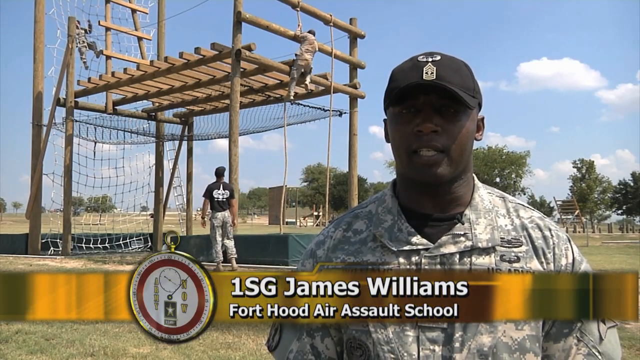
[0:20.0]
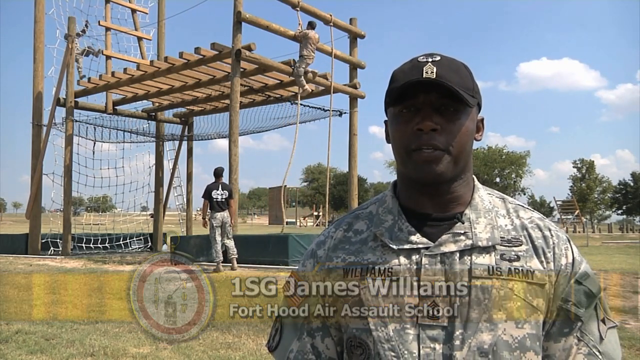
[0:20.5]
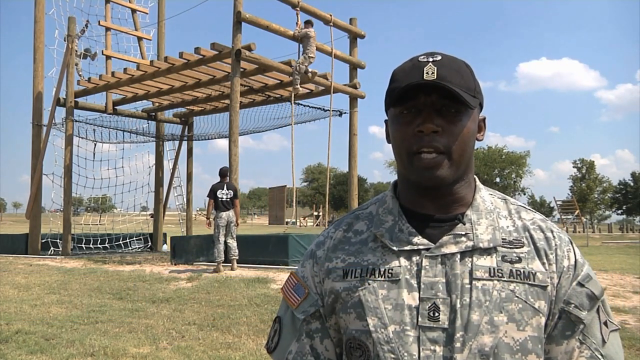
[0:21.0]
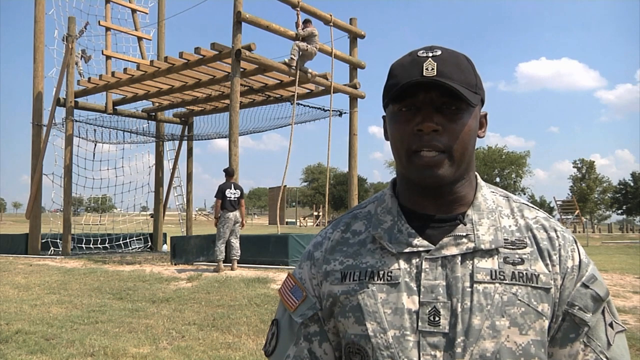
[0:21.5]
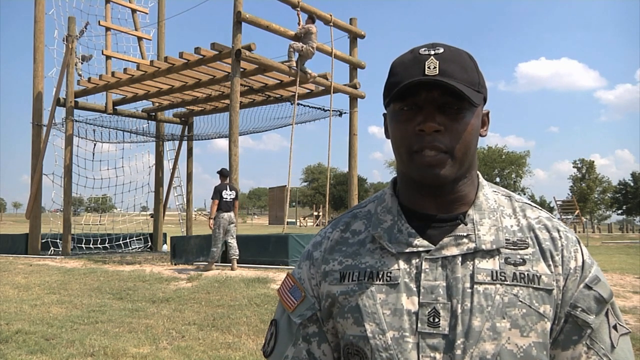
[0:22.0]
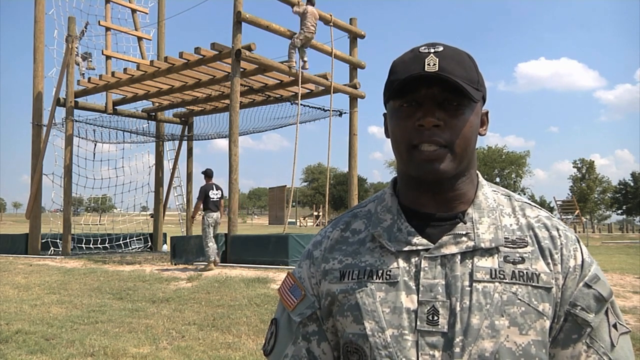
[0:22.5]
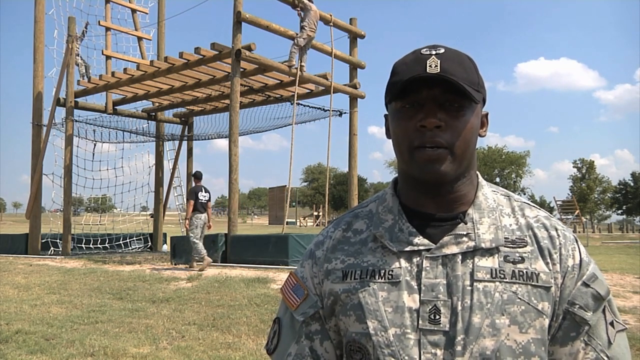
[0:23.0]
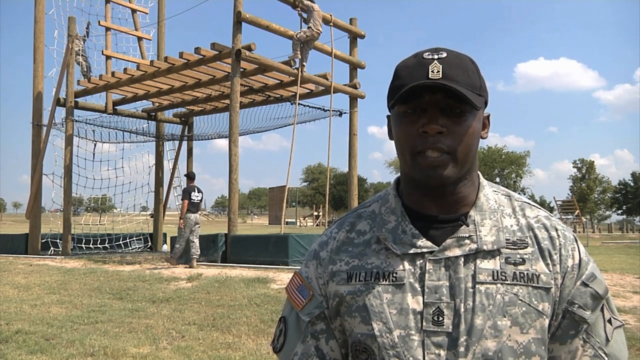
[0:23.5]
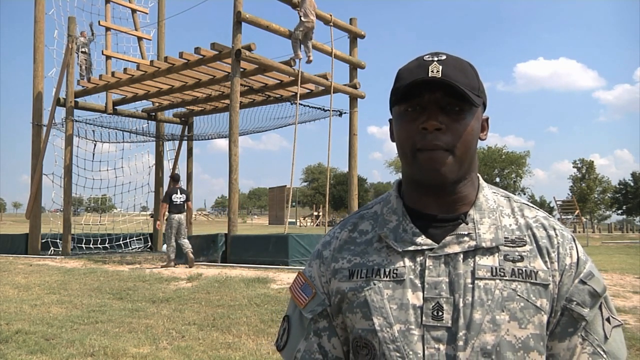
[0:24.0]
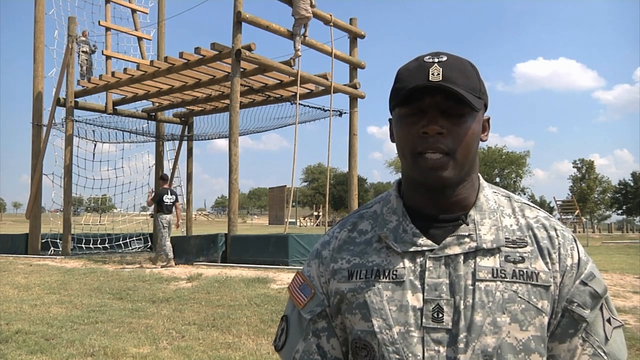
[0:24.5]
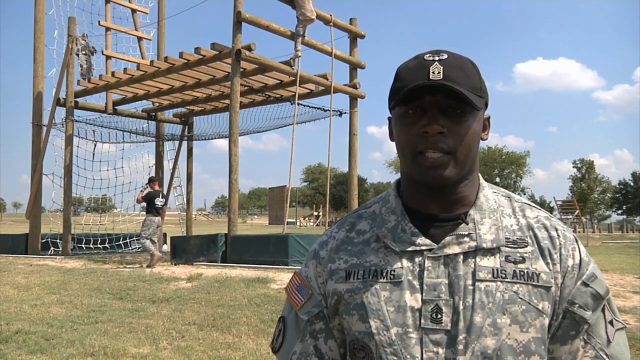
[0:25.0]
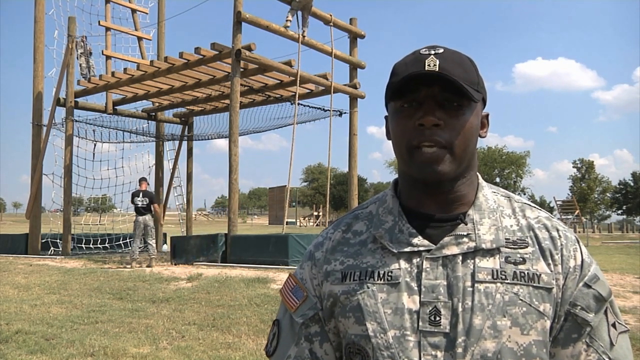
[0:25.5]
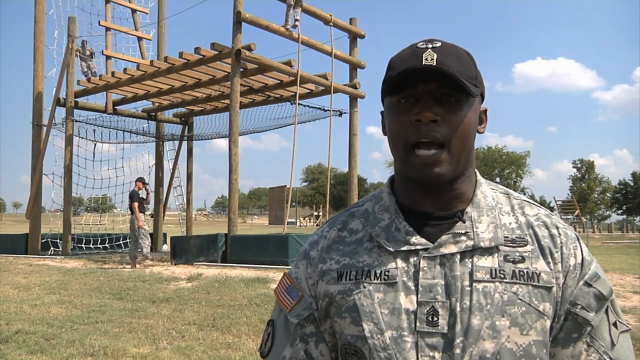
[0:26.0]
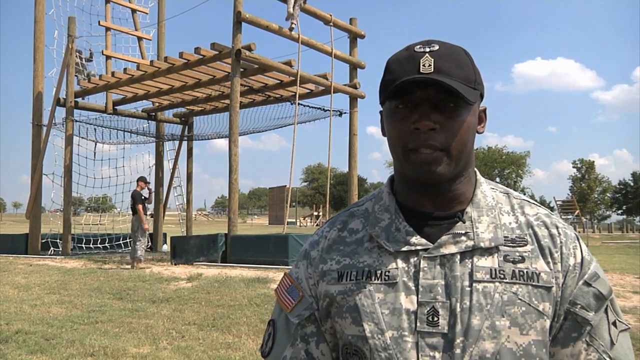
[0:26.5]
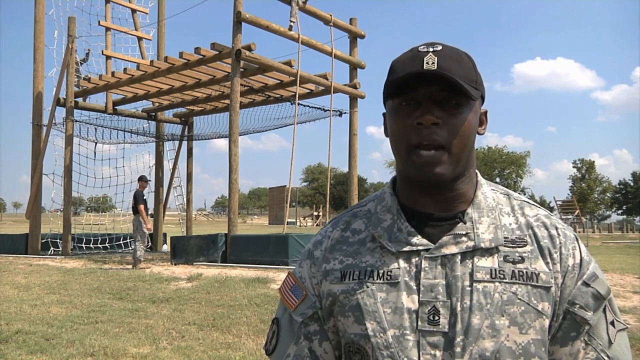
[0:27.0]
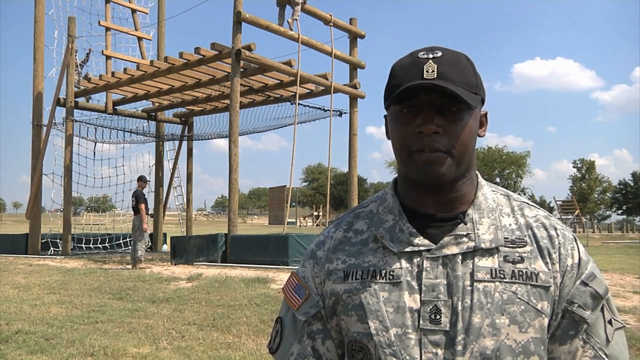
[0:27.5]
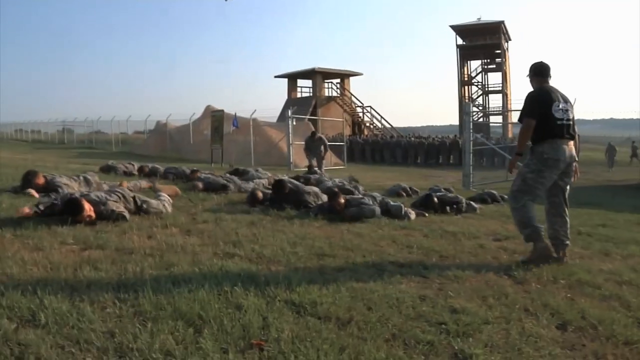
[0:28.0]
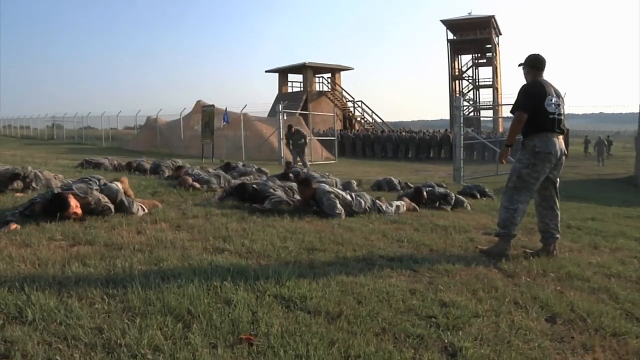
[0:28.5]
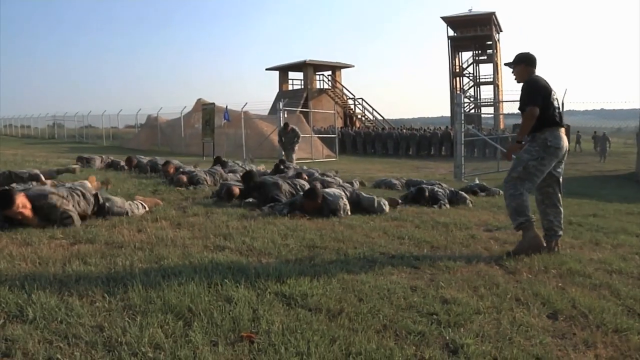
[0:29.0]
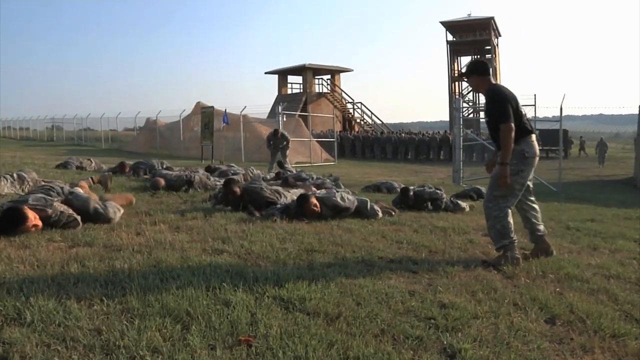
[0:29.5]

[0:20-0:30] A man stands at the front of the frame, looking and talking to the camera. Underneath him his name, 1st Sgt. James Williams, is displayed next to the 3D compass, with "Fort Hood Air Assault School" underneath his name. In the background, three men are on an obstacle course. One man climbs up the rope, steps his left foot onto the platform and pulls himself up. Meanwhile, a man climbs on the netting on the left side, and a man wearing a black baseball hat walks on the ground looking up at them. The video cuts to a group of soldiers crawling across the ground while two instructors look down at them. Two towers are visible in the background.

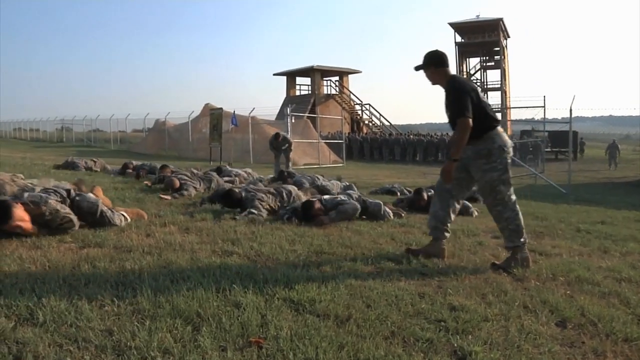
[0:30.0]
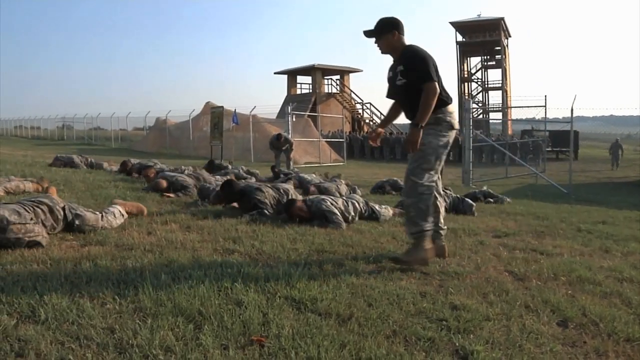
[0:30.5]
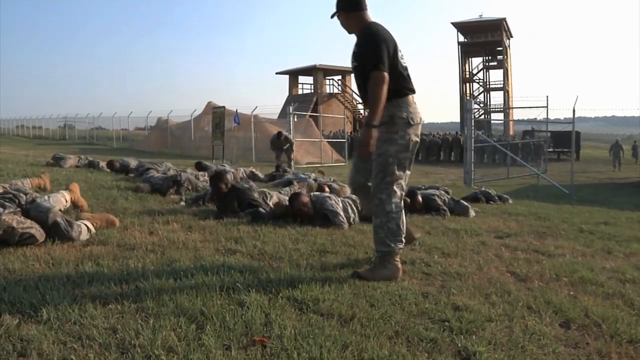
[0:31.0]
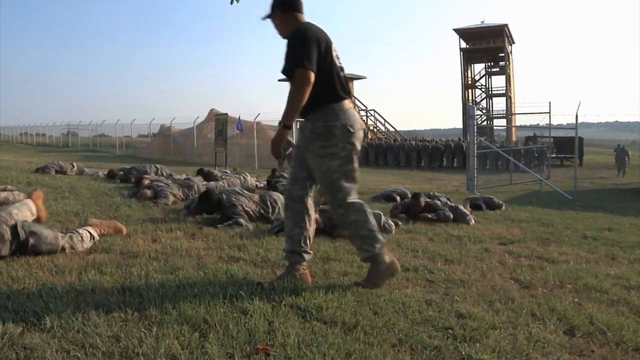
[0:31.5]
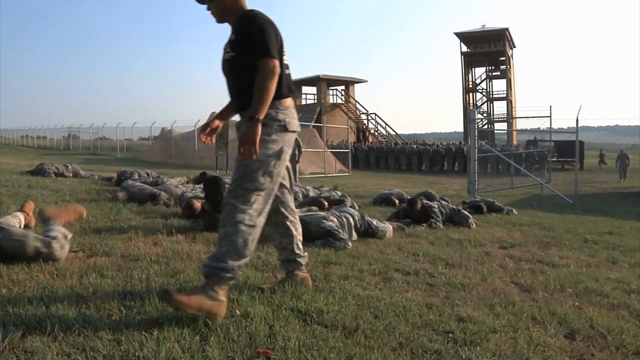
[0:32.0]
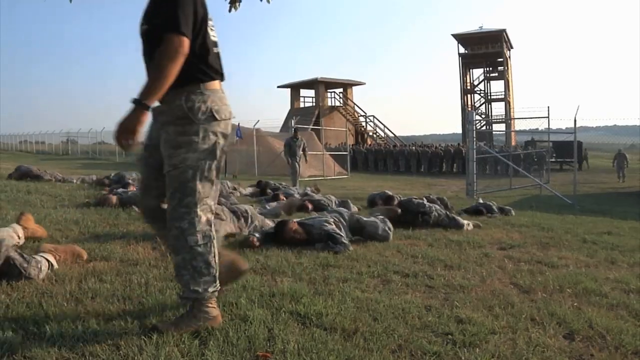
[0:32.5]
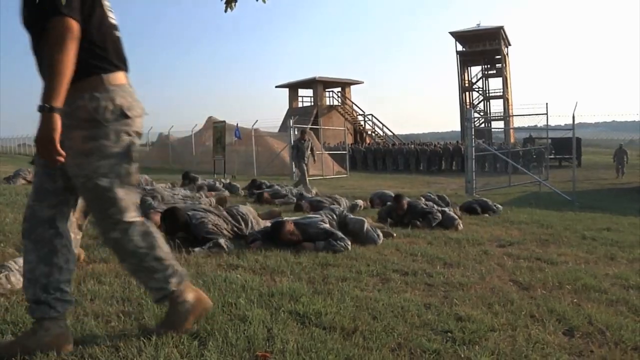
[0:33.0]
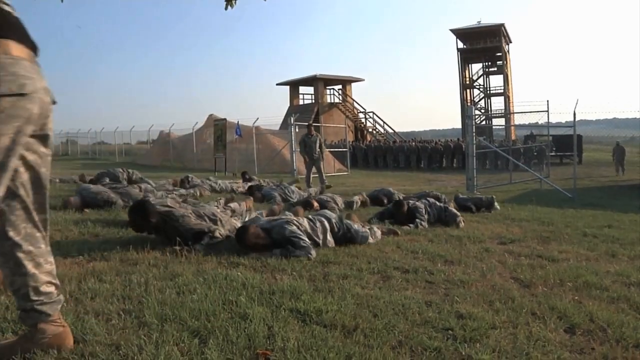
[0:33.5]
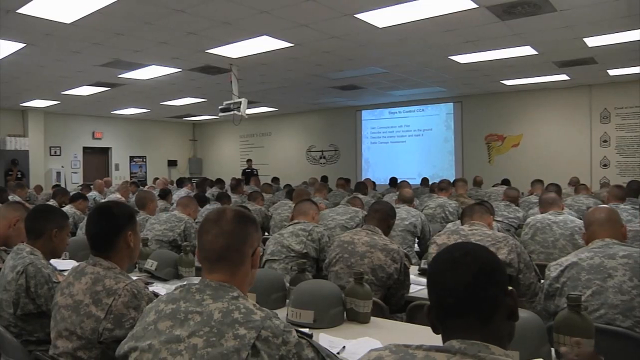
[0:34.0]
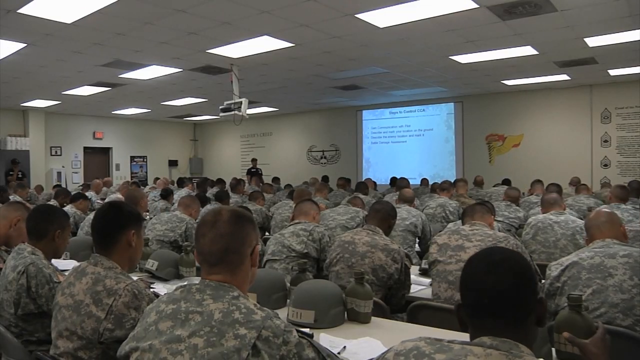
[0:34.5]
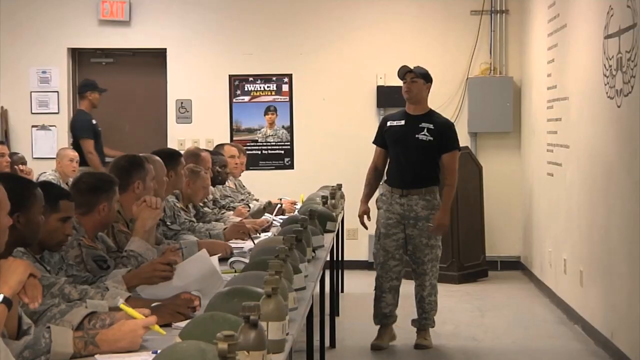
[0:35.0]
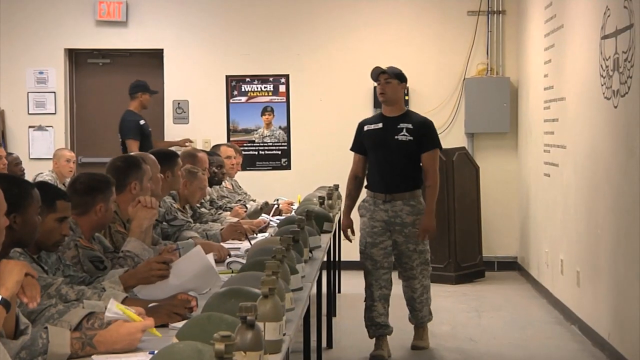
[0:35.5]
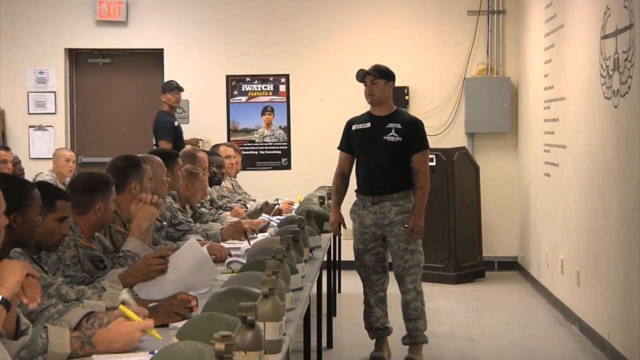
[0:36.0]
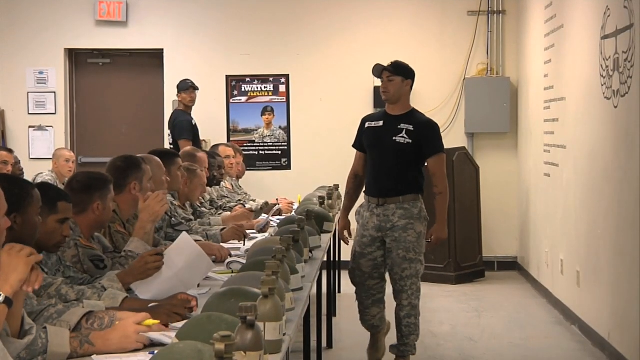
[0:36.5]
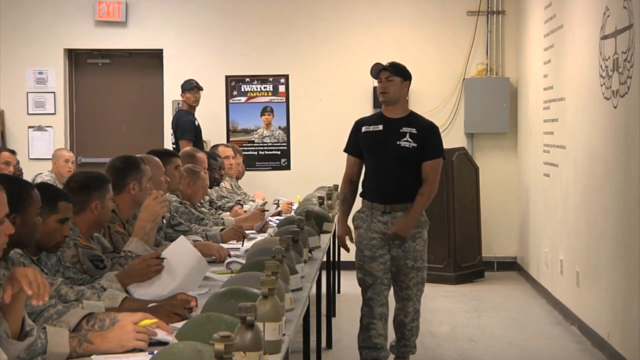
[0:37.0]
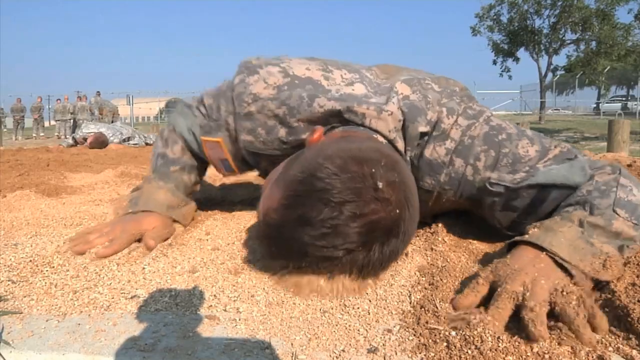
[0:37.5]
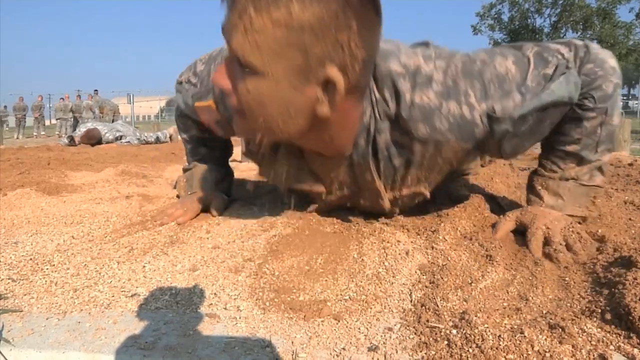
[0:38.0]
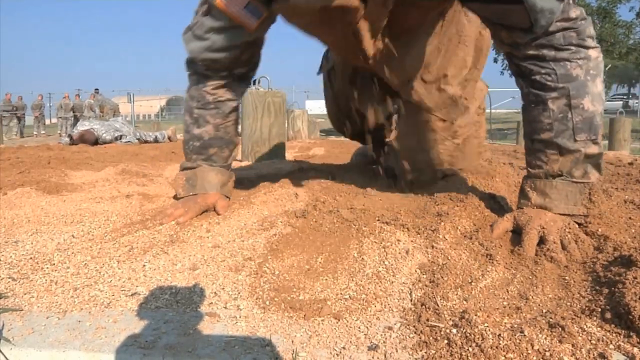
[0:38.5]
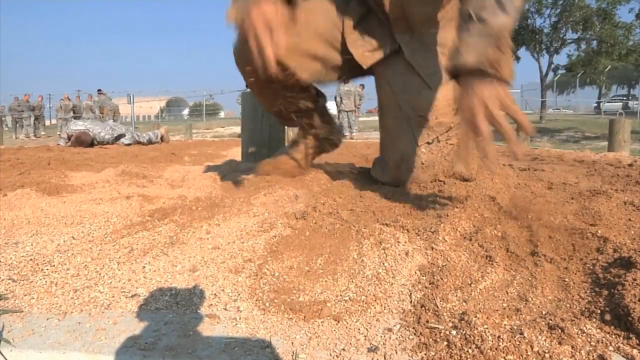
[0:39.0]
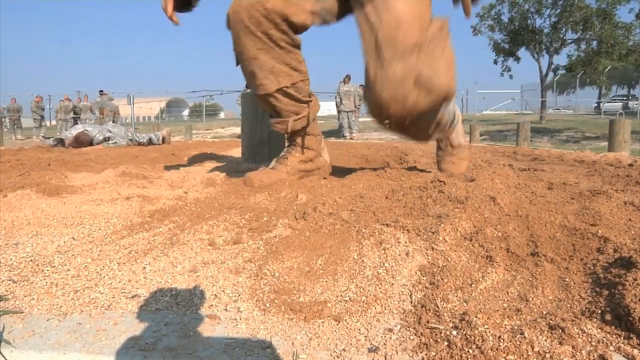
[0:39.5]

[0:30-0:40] A group of soldiers crawls across the ground, practicing a low-crawl exercise, while two instructors look down at them and speak to them. Next, a classroom is filled with soldiers who are all looking down at their papers or up at the front of the room; there appear to be between 50 and 100 soldiers. The instructor walks around in front of the men, speaking to them. A poster on the wall appears to say "Watch" and has an image of a soldier on it. Then a soldier, very dirty from low-crawling, crawls across the dirt. He pushes himself up with his hands, uses his left knee to stand up off the ground, steps his right foot onto the ground and stands up completely. Meanwhile, another soldier crawls in the background.